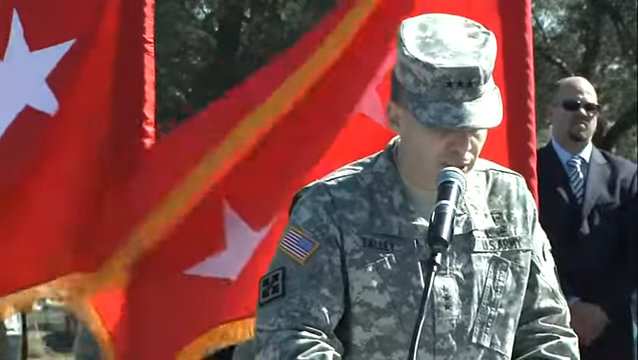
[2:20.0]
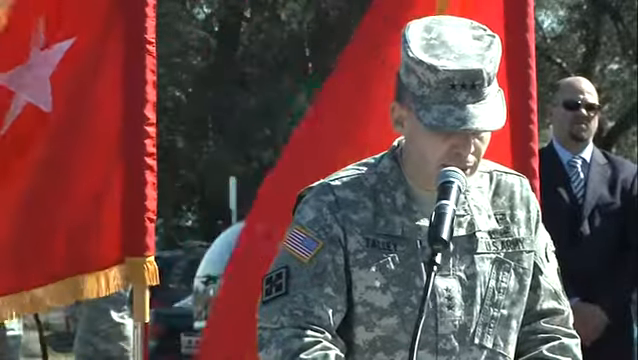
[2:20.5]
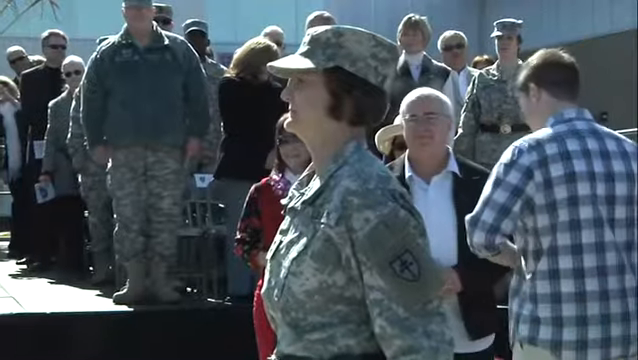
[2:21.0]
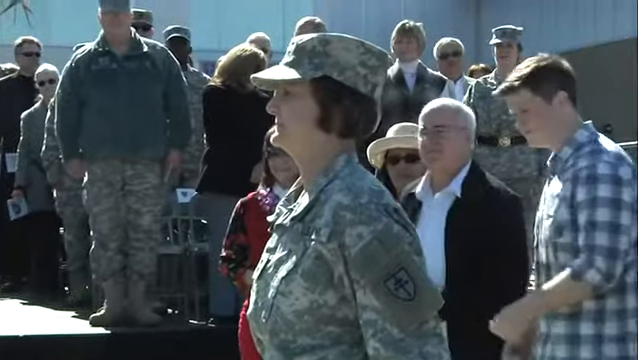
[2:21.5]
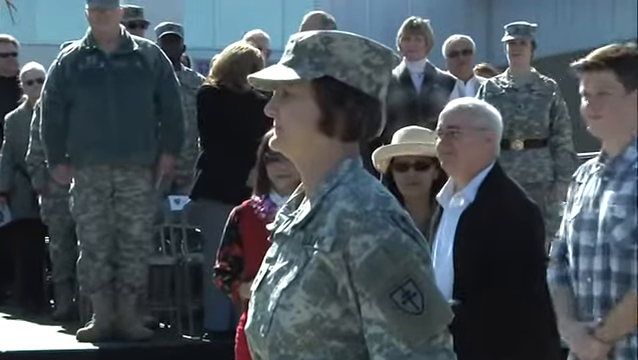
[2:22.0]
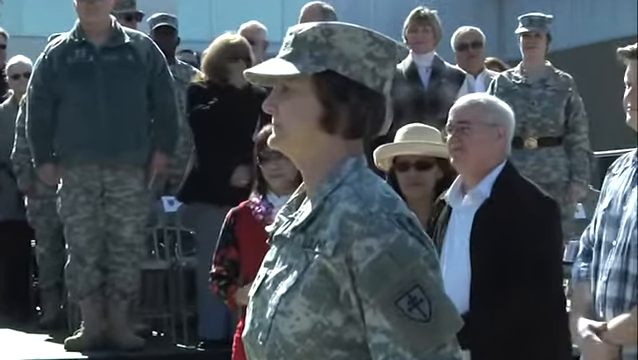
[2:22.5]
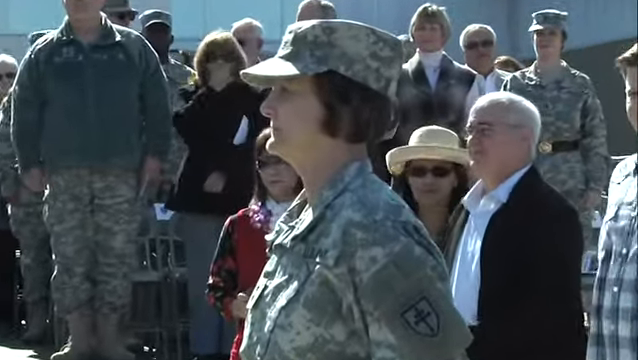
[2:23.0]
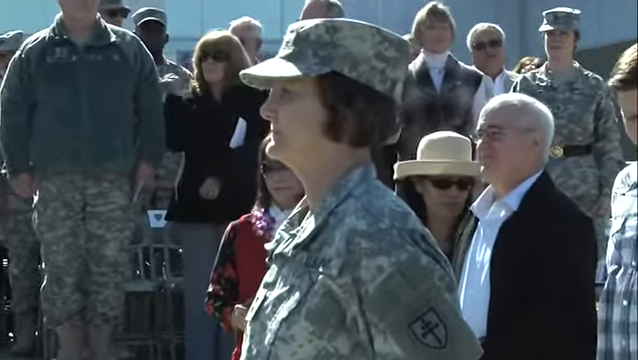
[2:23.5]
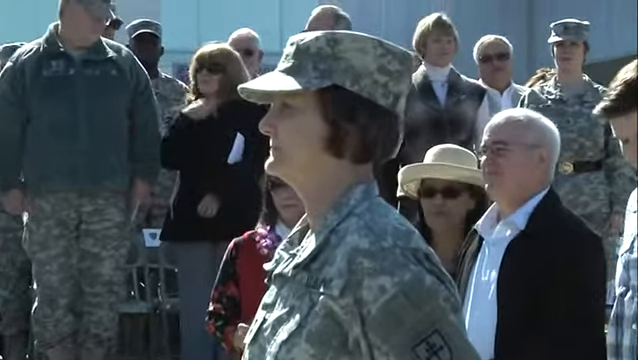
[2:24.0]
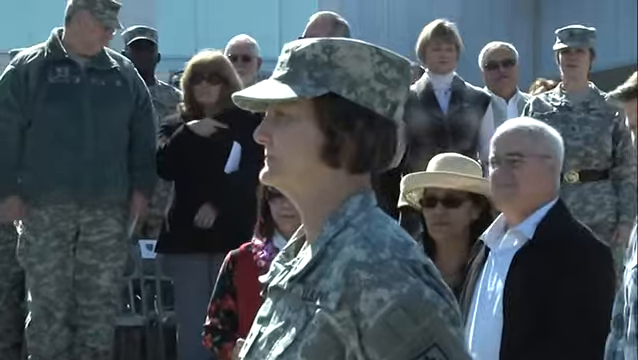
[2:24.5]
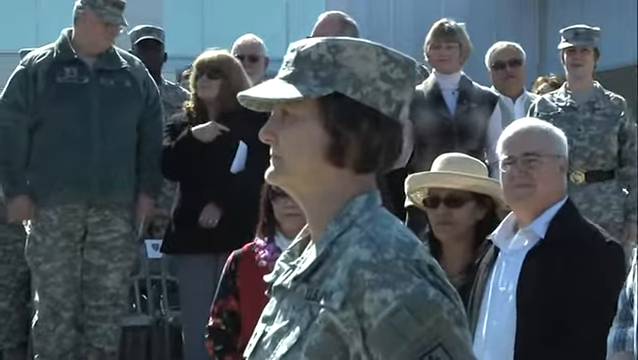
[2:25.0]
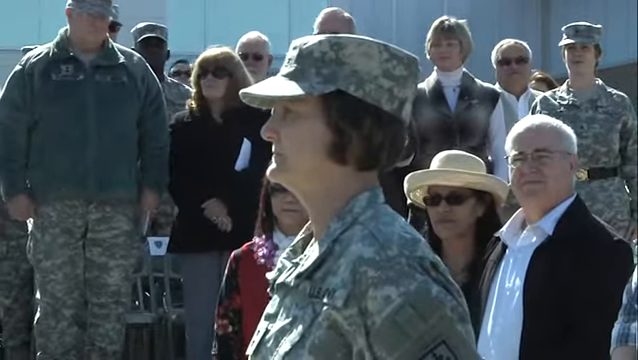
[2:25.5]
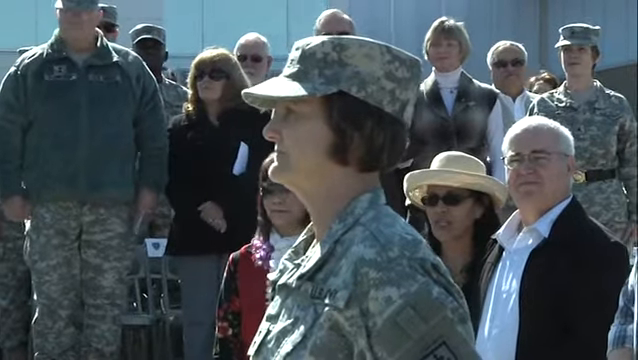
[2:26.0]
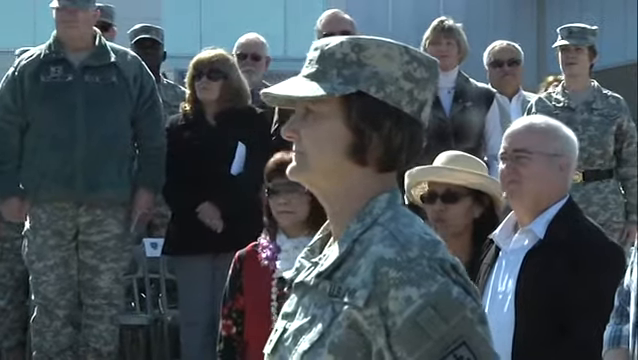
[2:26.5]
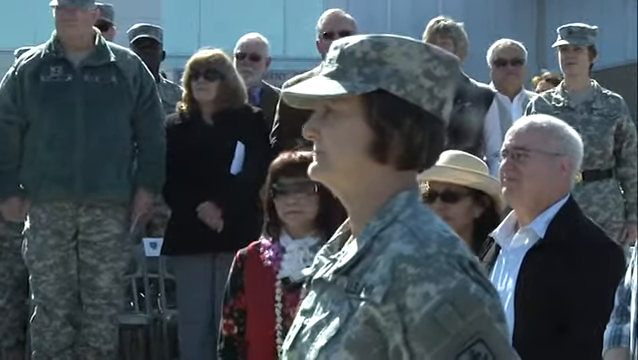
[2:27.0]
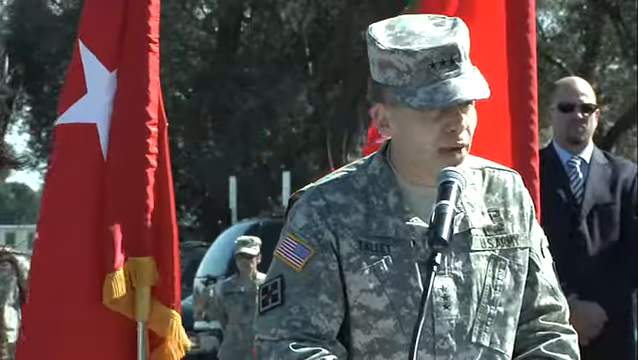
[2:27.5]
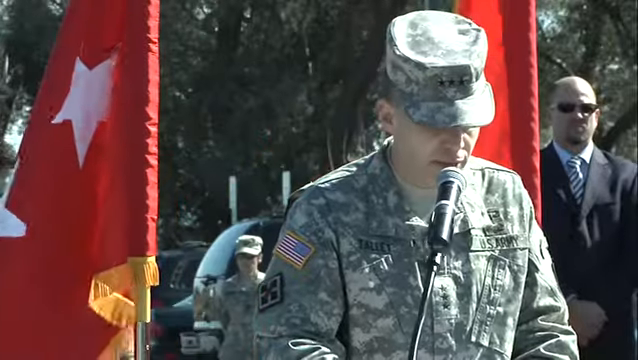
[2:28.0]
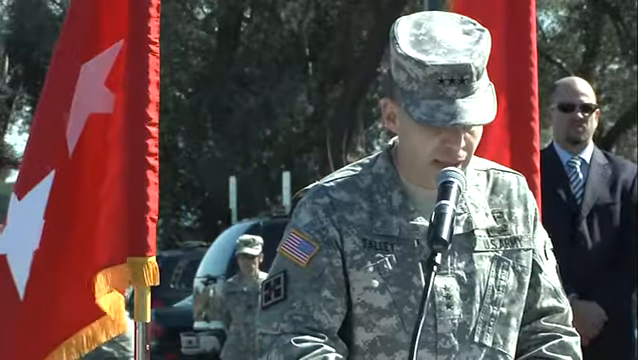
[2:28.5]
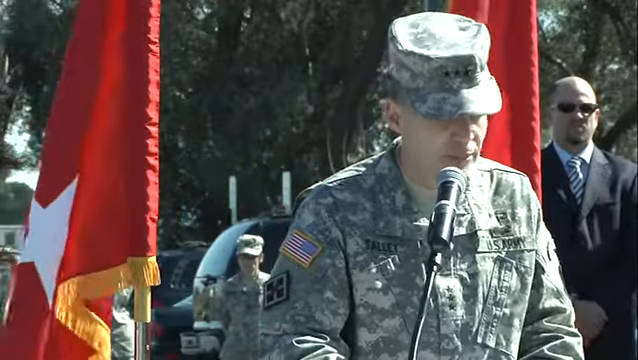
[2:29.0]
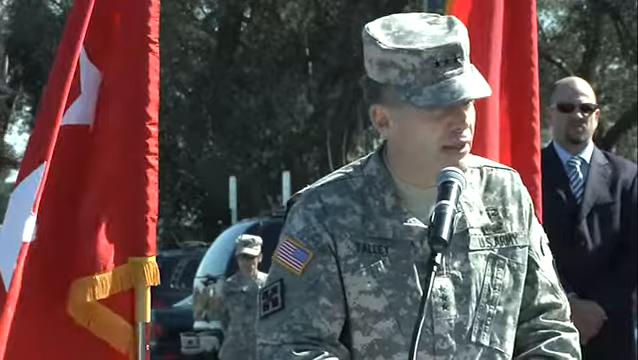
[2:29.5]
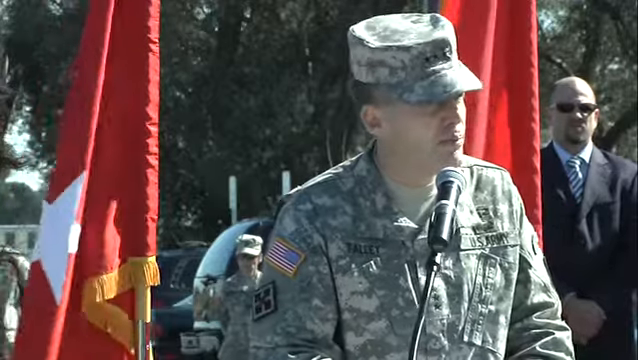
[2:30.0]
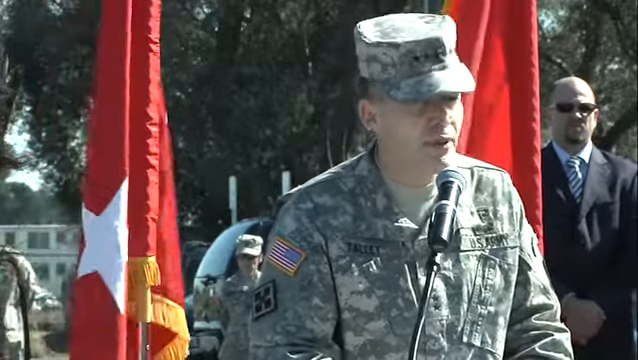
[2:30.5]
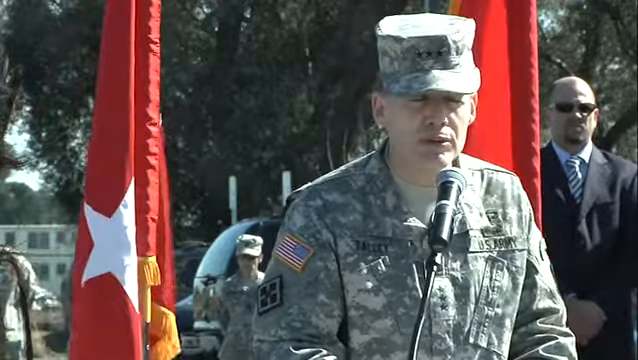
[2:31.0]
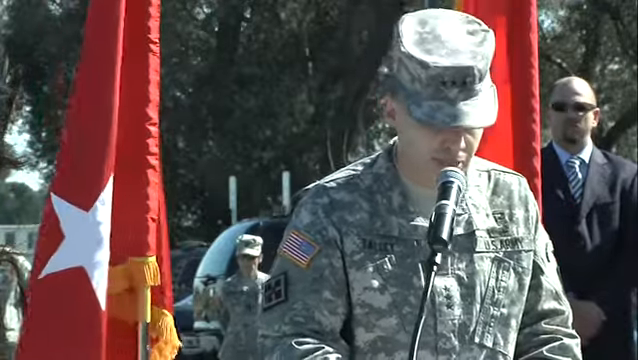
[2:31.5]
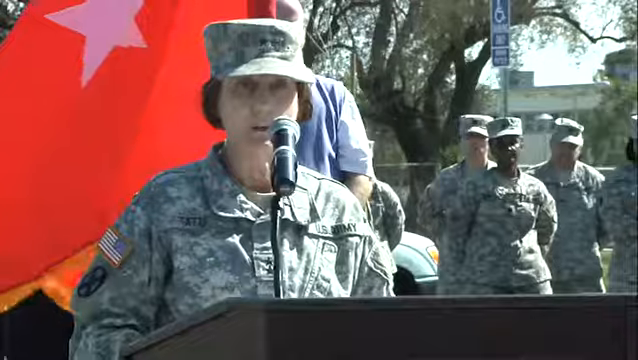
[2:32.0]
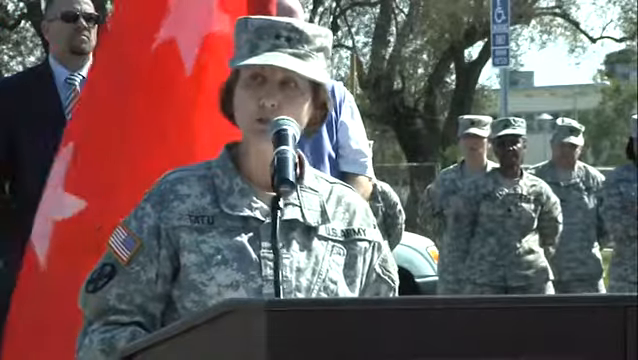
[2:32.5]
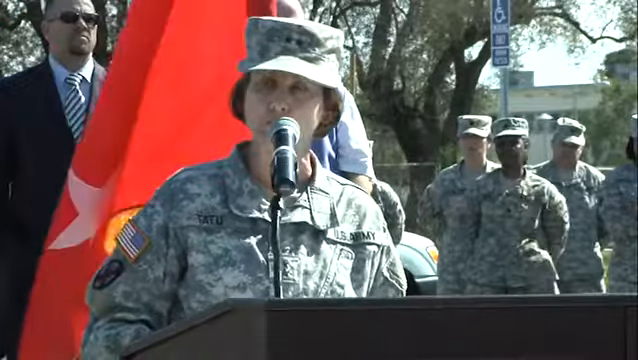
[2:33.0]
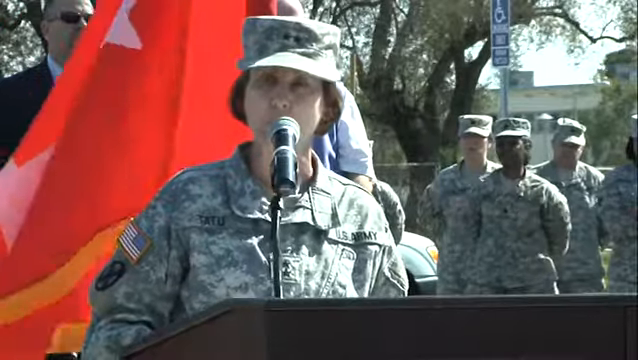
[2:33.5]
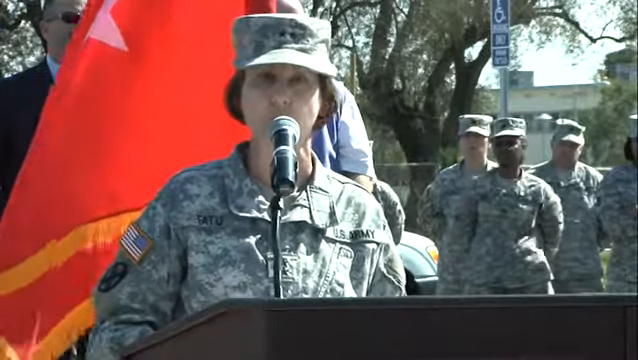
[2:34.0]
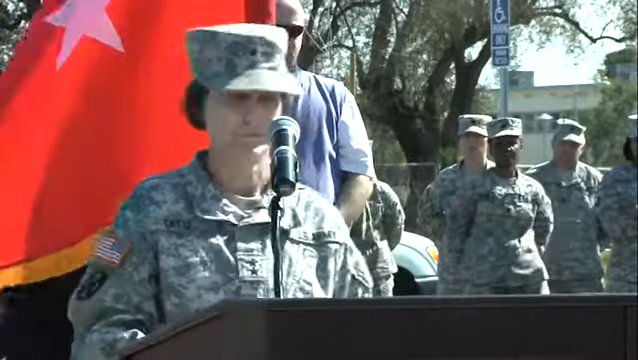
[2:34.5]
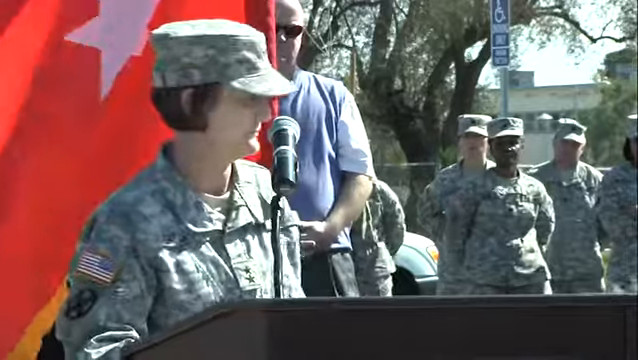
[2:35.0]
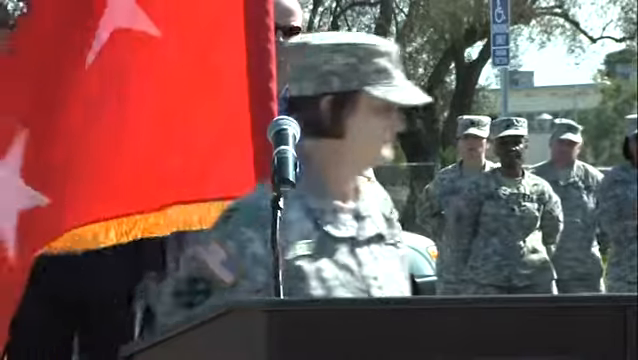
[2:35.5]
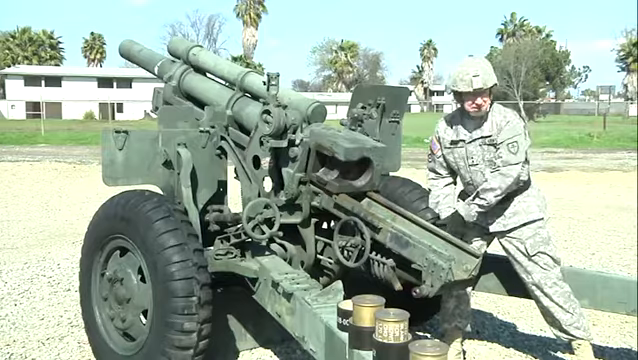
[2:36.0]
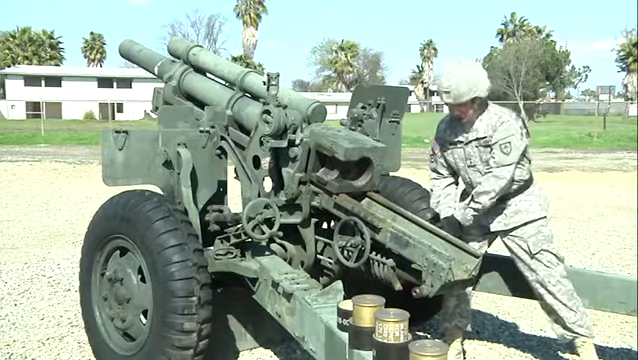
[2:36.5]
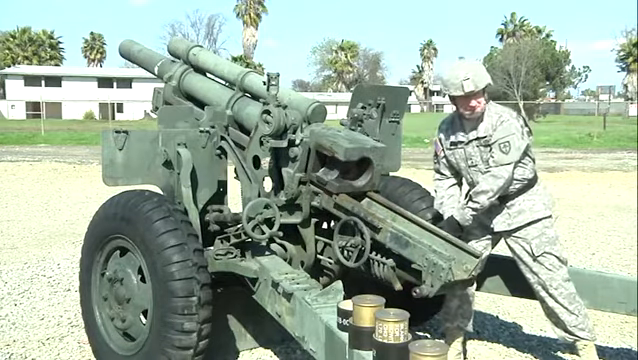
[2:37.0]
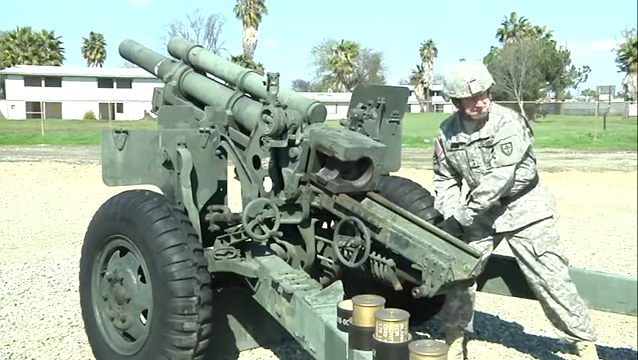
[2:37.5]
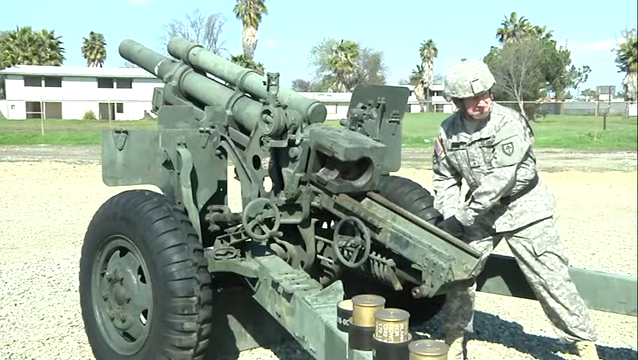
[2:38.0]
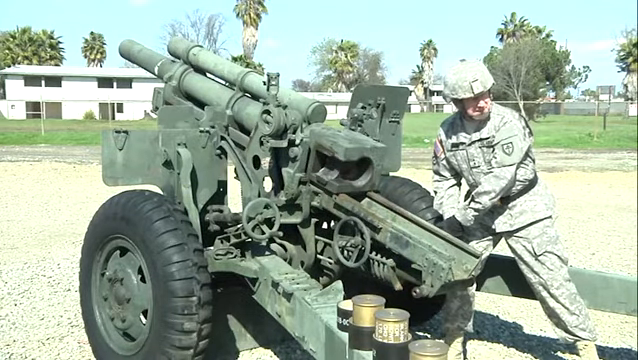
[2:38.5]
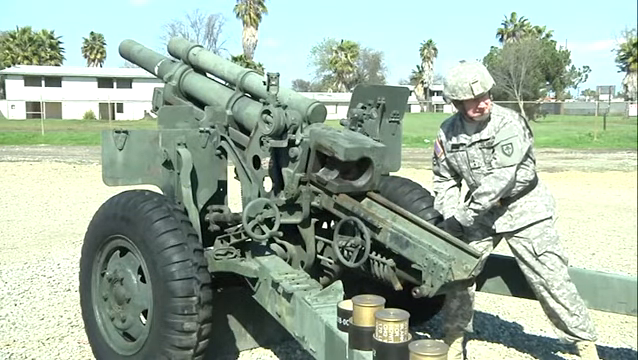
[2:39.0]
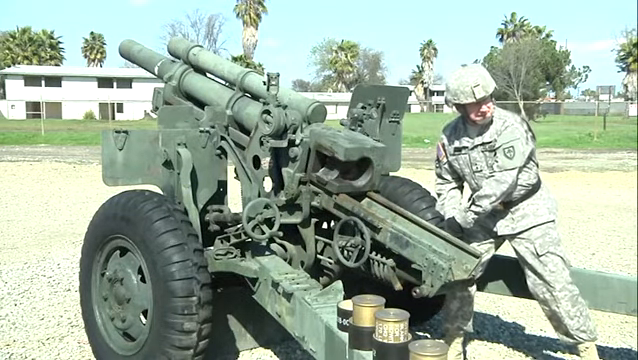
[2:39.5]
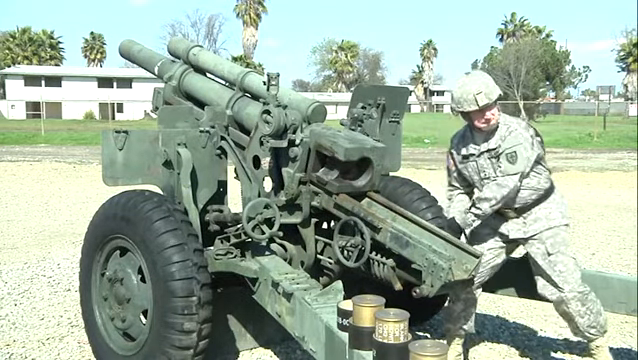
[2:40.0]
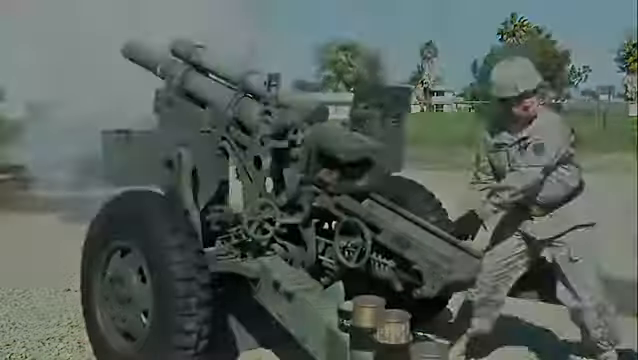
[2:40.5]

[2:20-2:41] A woman stands, visible from the chest up, wearing a green, brown and dark green camouflage military uniform and a camouflage military hat. In the background other people stand on a small stage: one wears a white shirt with a black jacket, a couple wear military uniforms, and a couple wear ordinary civilian clothes. The video cuts to a man standing behind a podium, speaking into a microphone, in a camouflage military uniform with three stars on the front of his hat. Behind him are two solid red flags on flagpoles with white stars in the middle and bright orange string fringe along the edges. It then cuts to a person standing behind a green howitzer with two big wheels; he pulls a lever, it shoots a rocket, and smoke comes out of the tip.